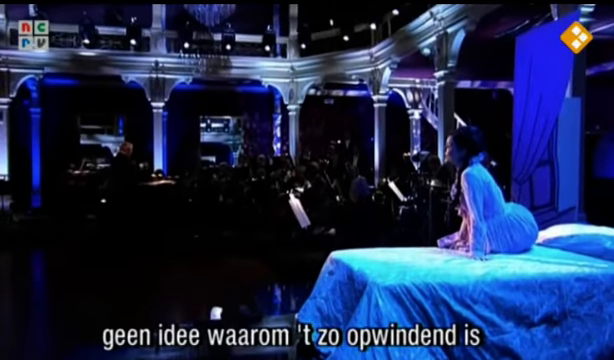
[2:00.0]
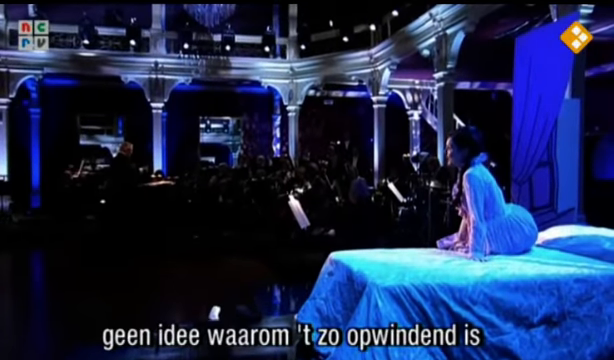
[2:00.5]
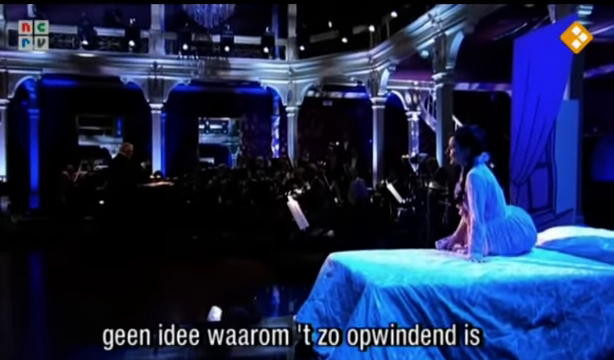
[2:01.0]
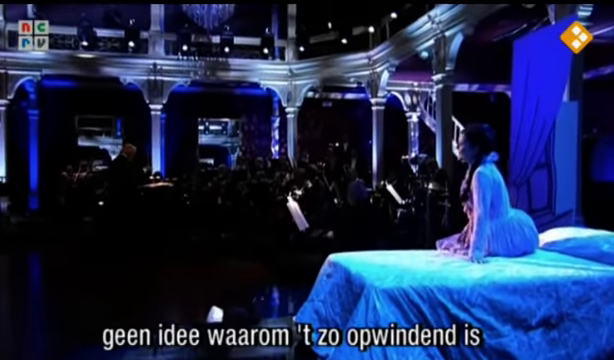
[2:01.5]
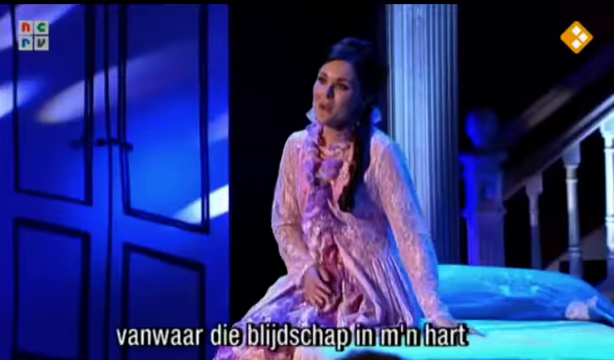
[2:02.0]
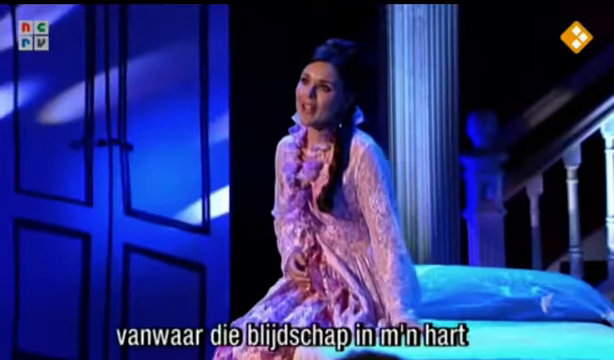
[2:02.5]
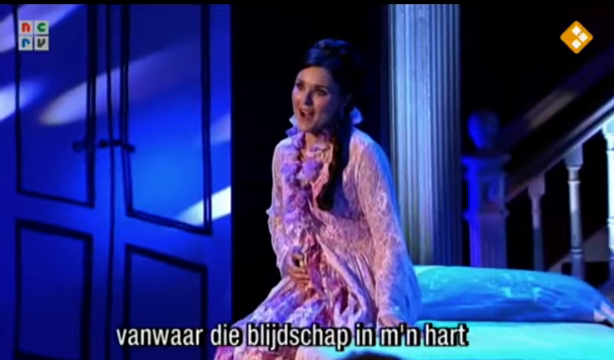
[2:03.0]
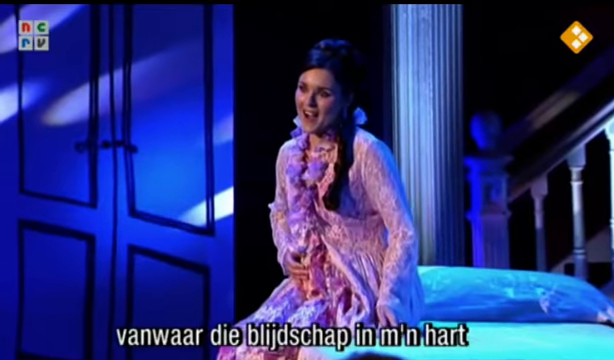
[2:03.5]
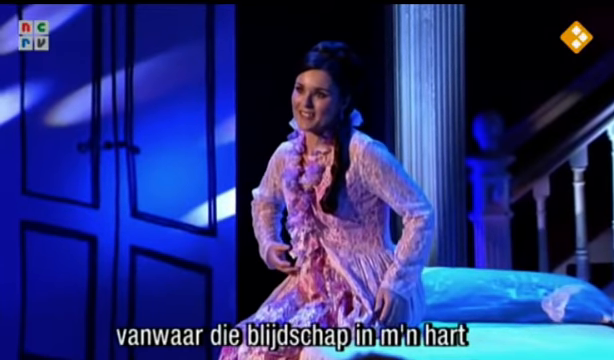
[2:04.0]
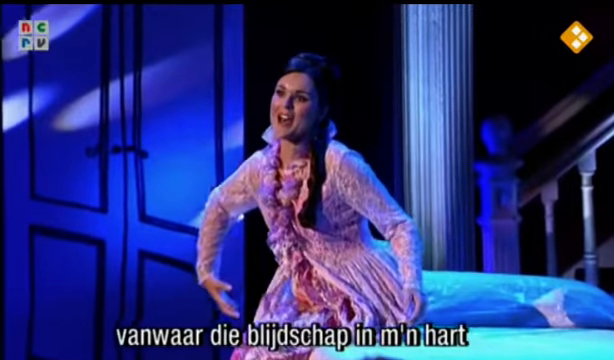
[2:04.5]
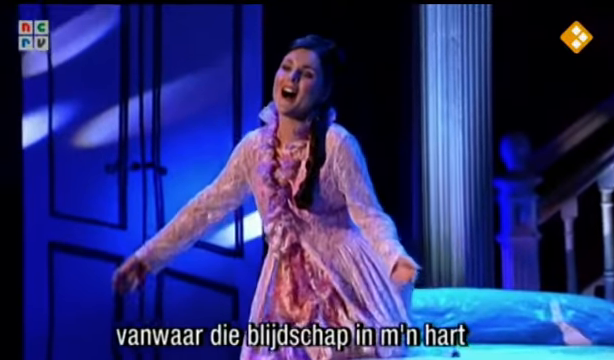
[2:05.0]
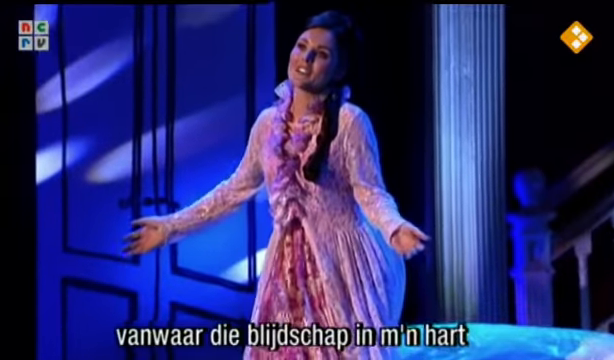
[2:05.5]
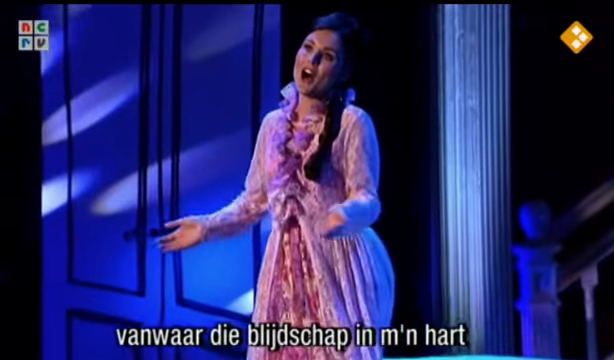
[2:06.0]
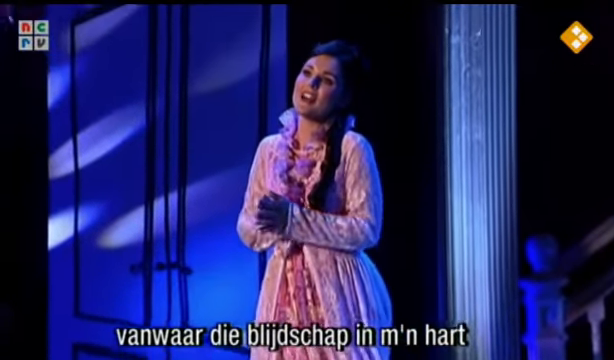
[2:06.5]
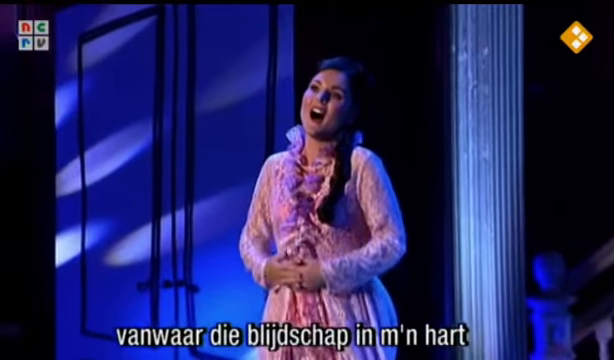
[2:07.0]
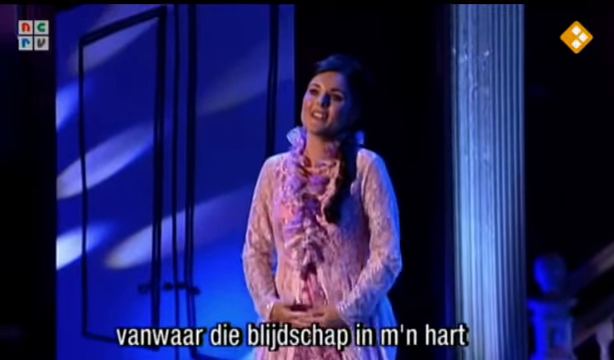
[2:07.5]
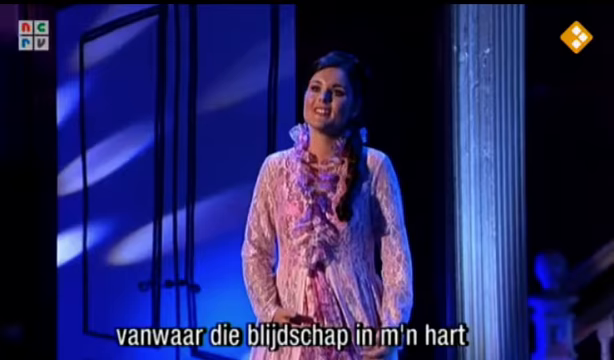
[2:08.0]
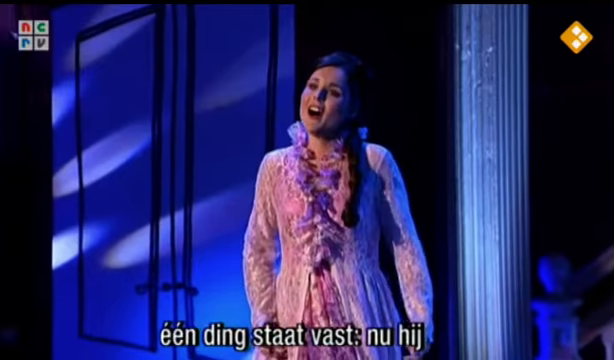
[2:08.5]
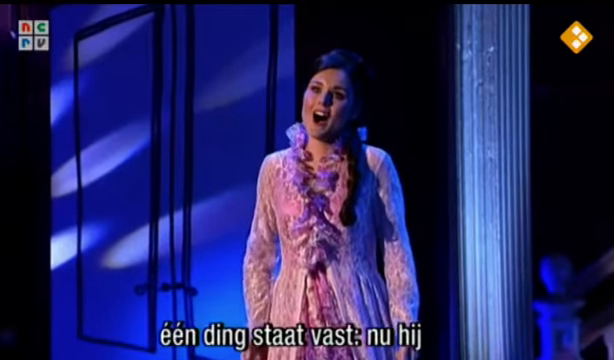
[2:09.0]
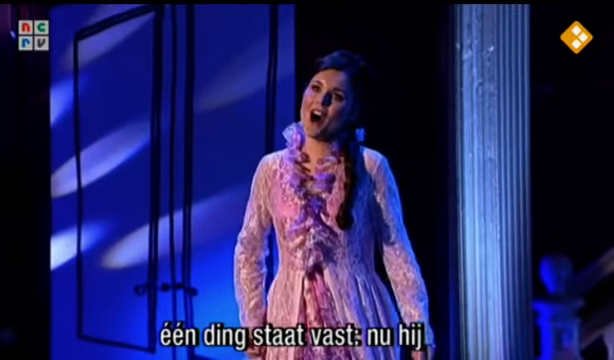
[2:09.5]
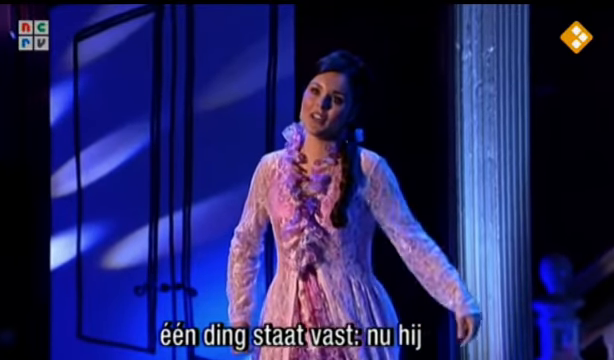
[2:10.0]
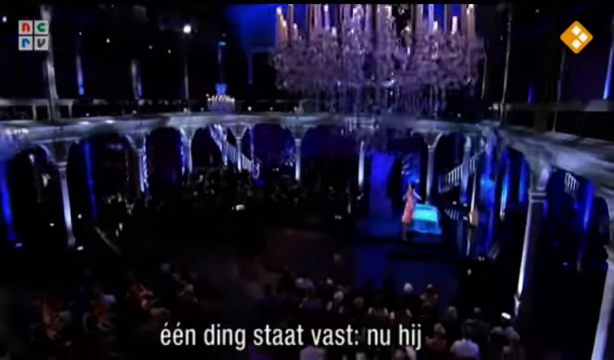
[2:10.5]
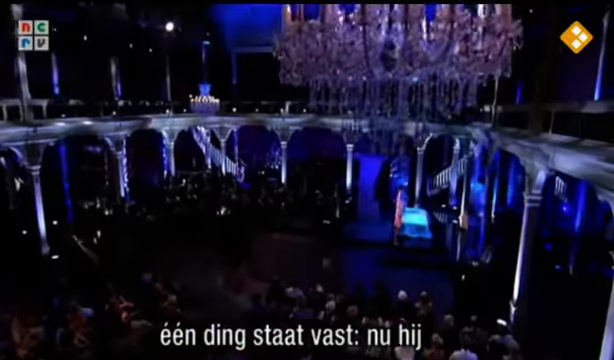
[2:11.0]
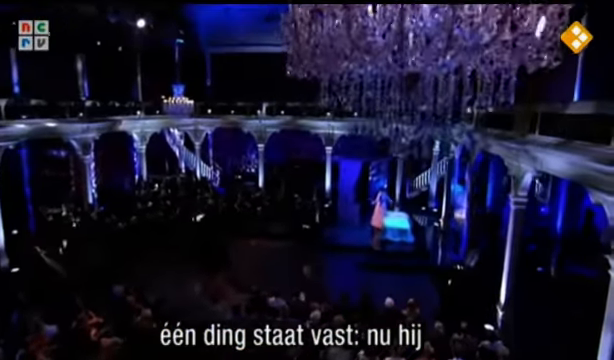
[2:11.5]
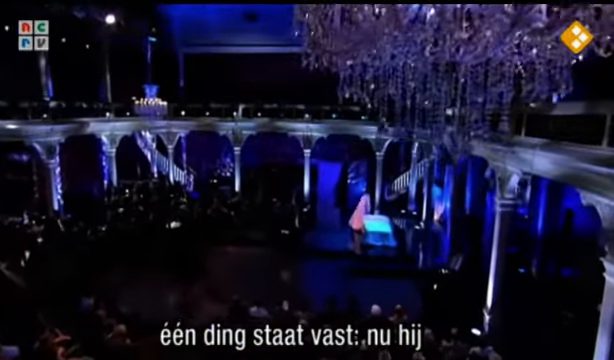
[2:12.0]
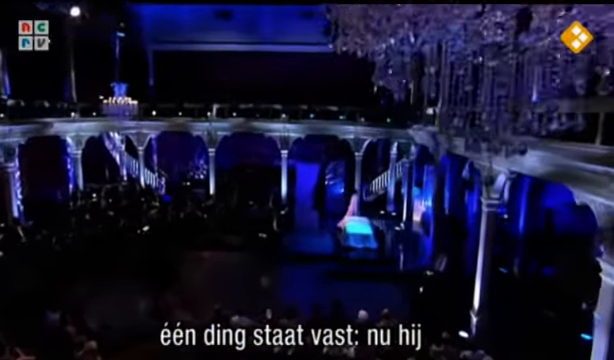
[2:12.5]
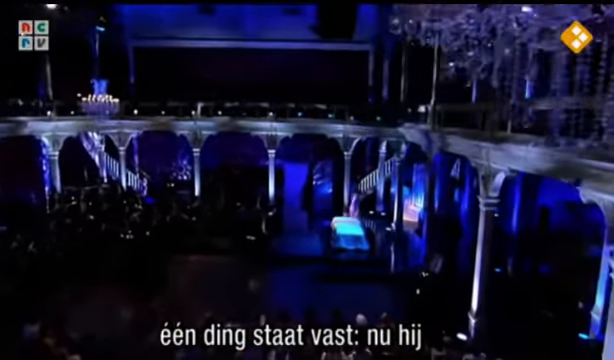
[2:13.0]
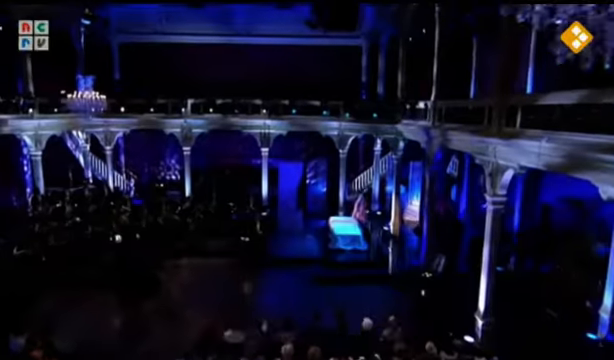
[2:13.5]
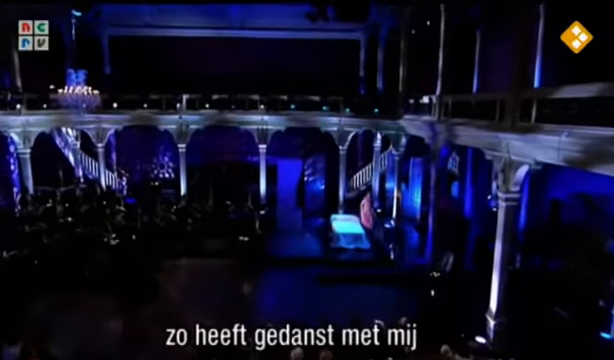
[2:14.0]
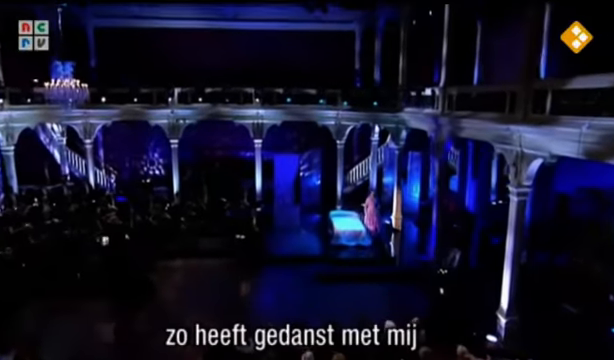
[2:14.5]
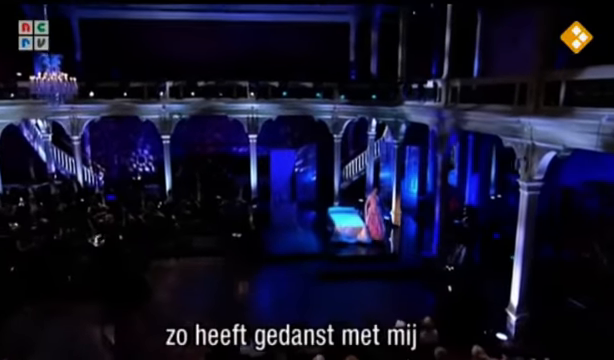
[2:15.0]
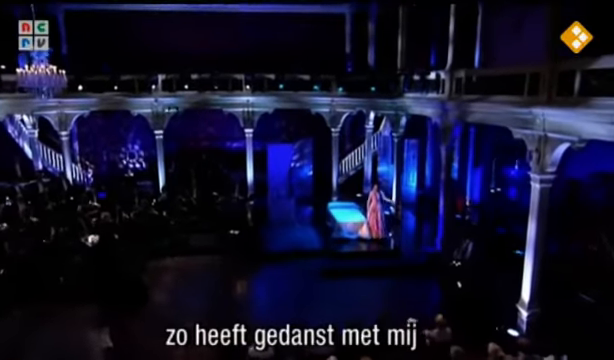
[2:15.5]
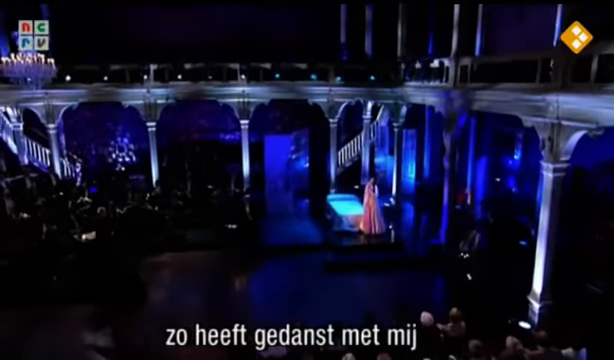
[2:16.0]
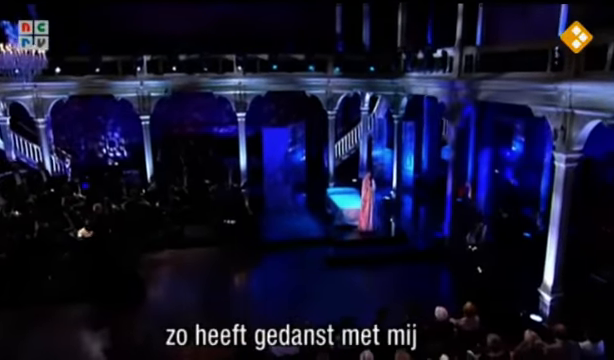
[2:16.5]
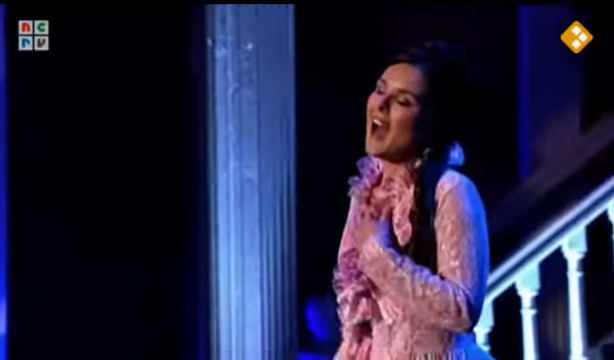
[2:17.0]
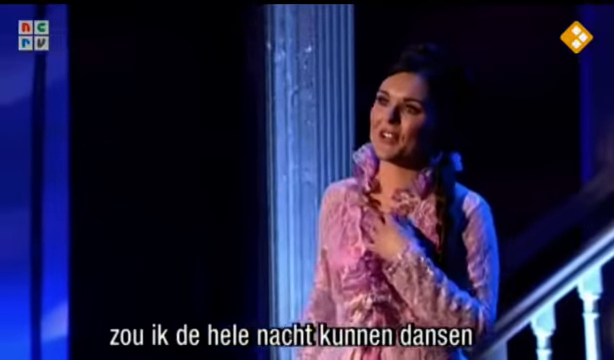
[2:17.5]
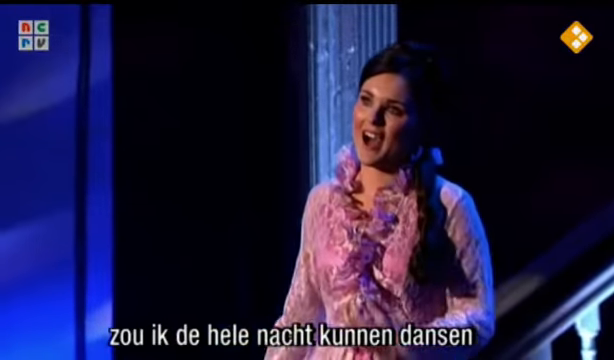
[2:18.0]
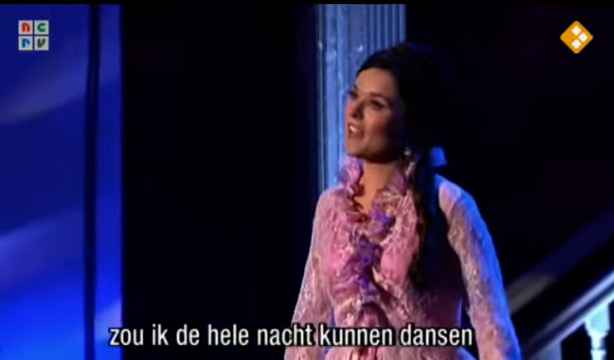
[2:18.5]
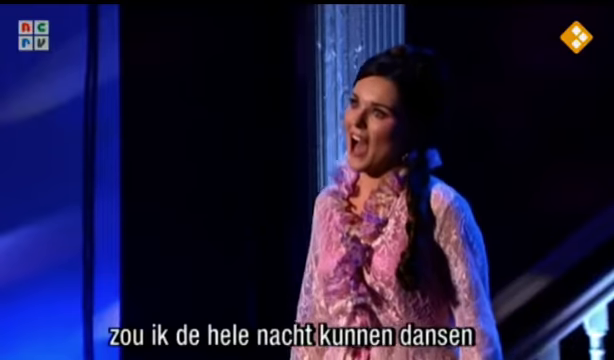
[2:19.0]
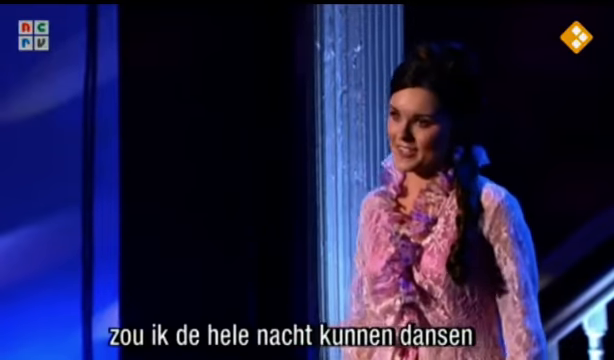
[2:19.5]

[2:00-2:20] The singer in the pink dress sits on the bed as the camera rotates from behind her to her side. After a few moments, she stands up, raising her arms and hands out to the side, her head tilted back as she stares into the crowd, off into the distance. She puts her hands in a praying position in front of her, then clasps them with her fingers intertwined. She turns and walks around the bed, then stops and faces the audience, gazing off into the distance with a dreamy look while she keeps singing. She puts her hand in front of her chest as she sings very passionately with a smile.